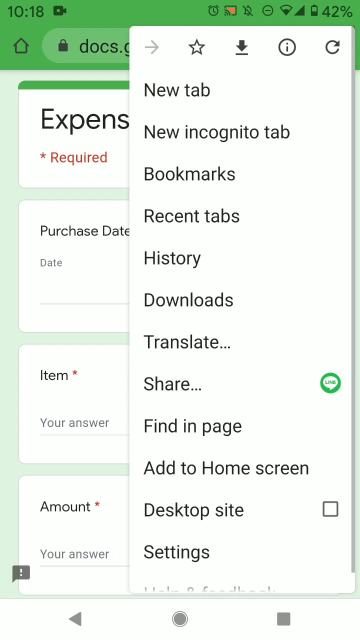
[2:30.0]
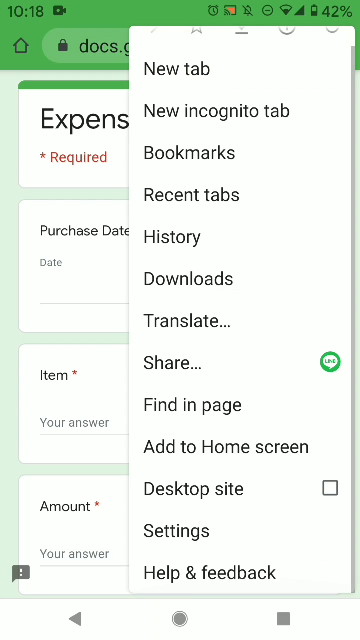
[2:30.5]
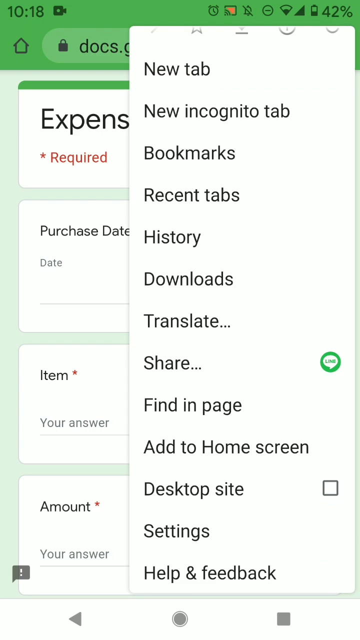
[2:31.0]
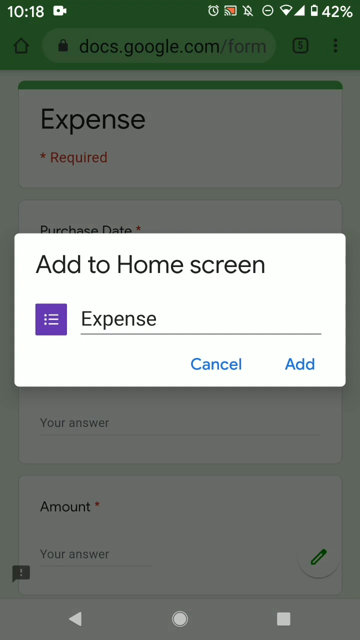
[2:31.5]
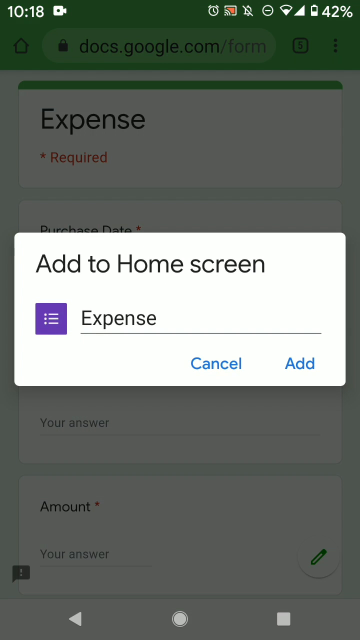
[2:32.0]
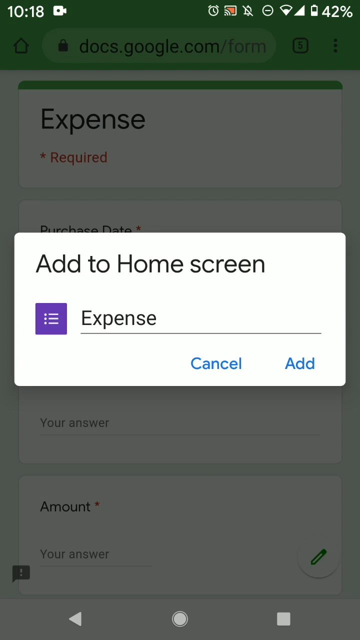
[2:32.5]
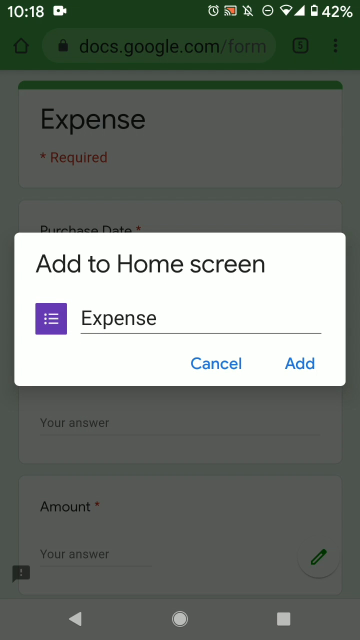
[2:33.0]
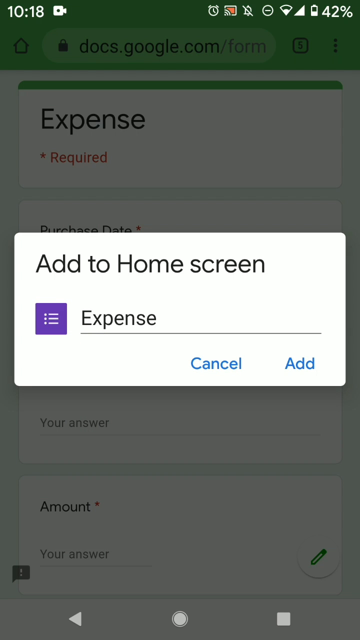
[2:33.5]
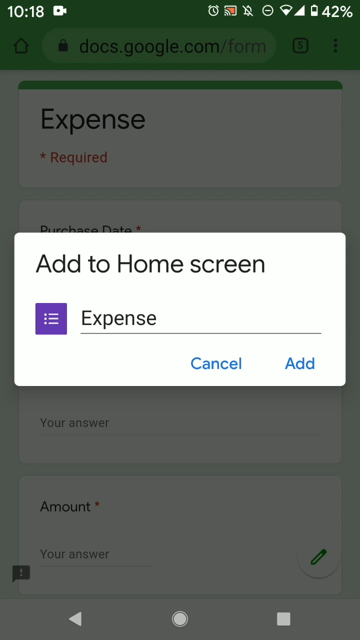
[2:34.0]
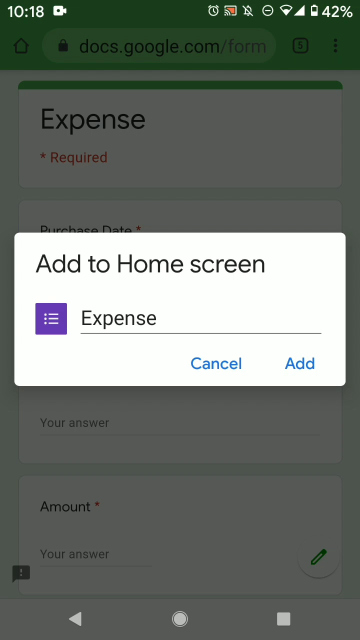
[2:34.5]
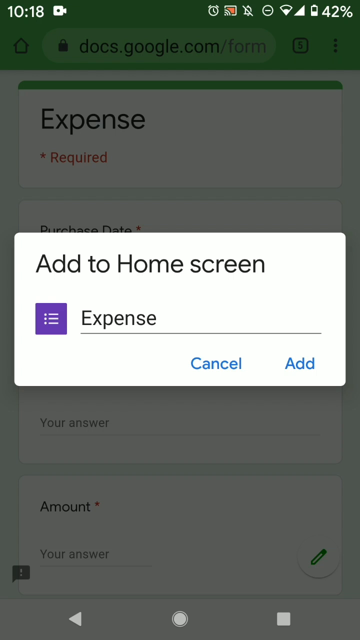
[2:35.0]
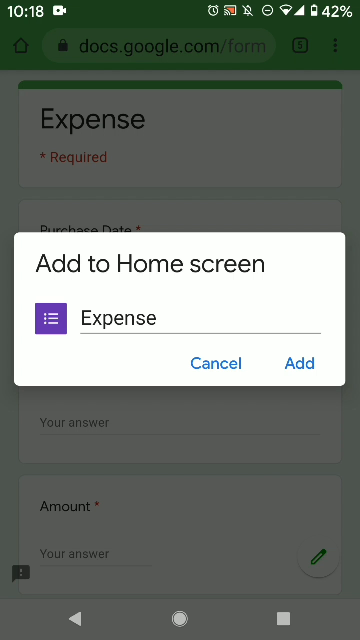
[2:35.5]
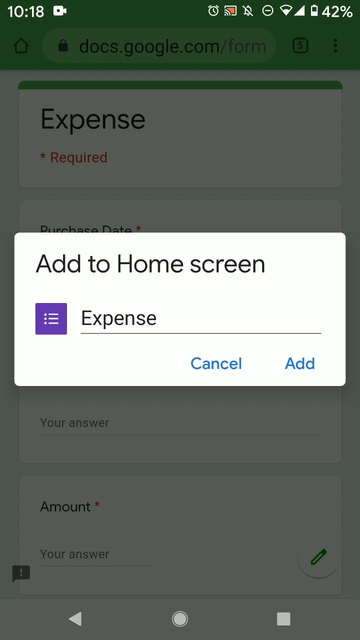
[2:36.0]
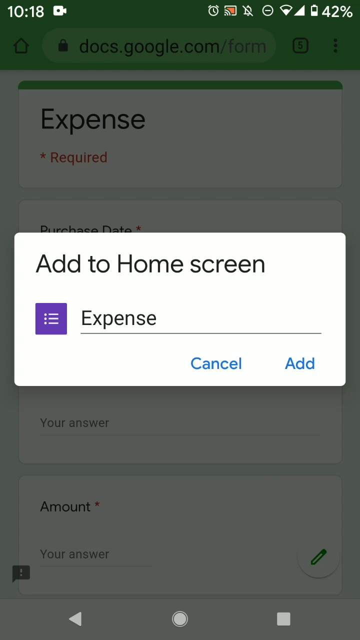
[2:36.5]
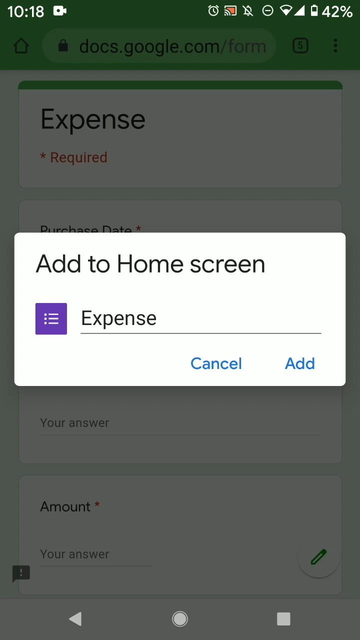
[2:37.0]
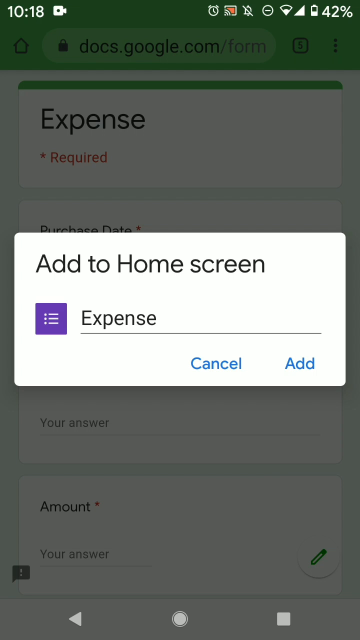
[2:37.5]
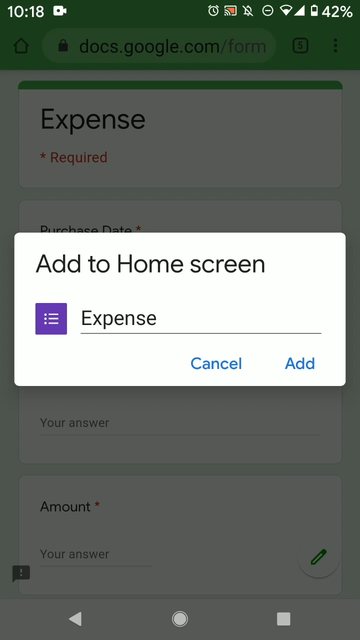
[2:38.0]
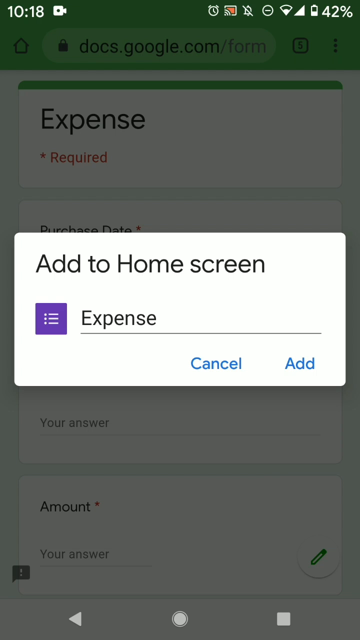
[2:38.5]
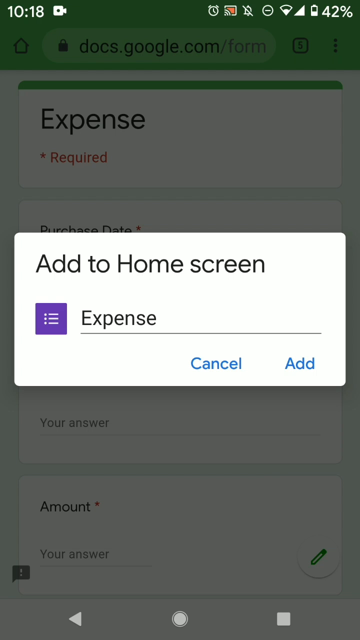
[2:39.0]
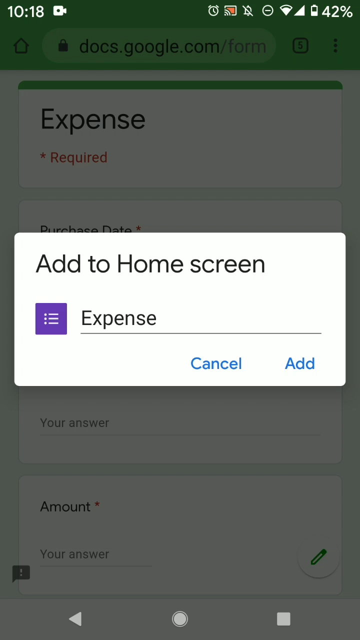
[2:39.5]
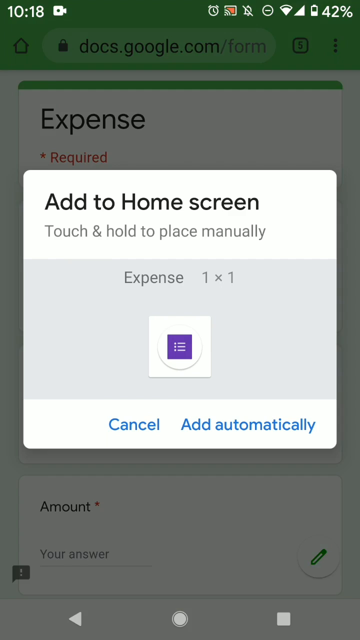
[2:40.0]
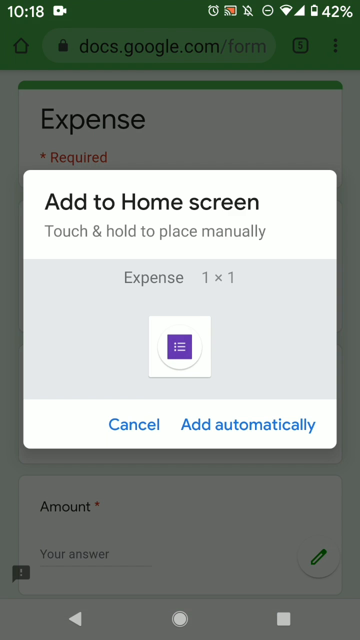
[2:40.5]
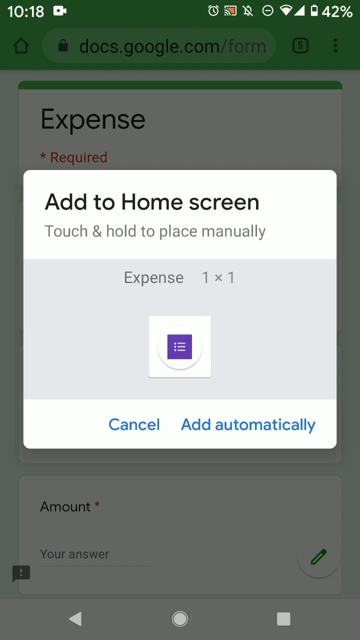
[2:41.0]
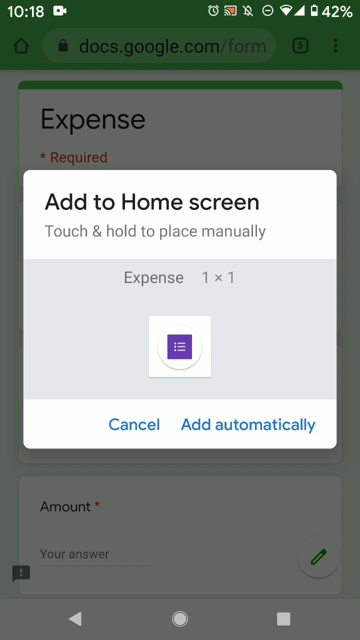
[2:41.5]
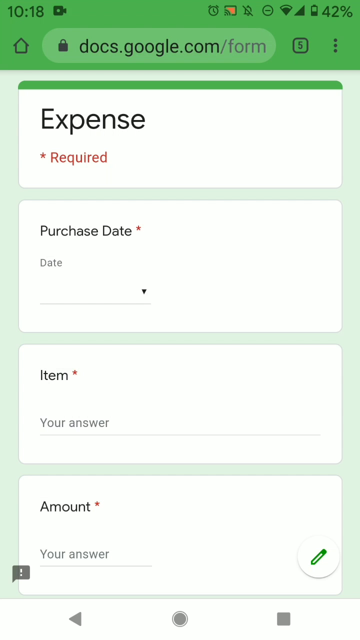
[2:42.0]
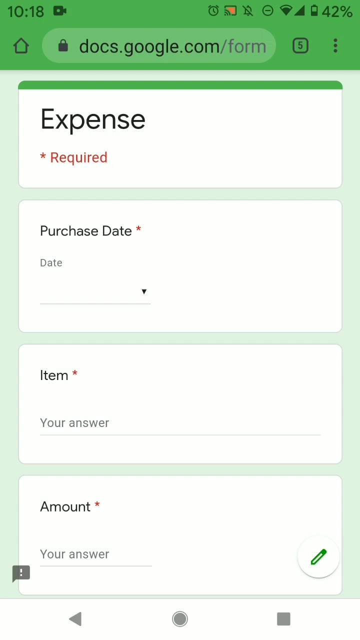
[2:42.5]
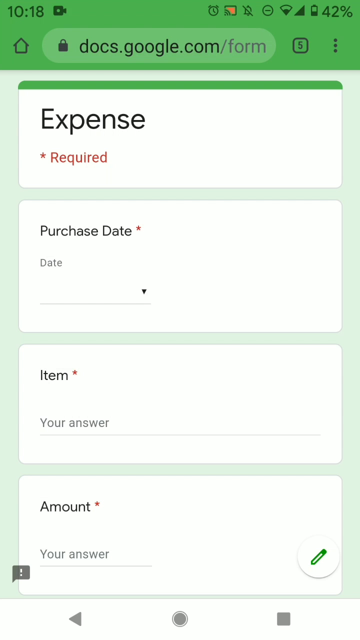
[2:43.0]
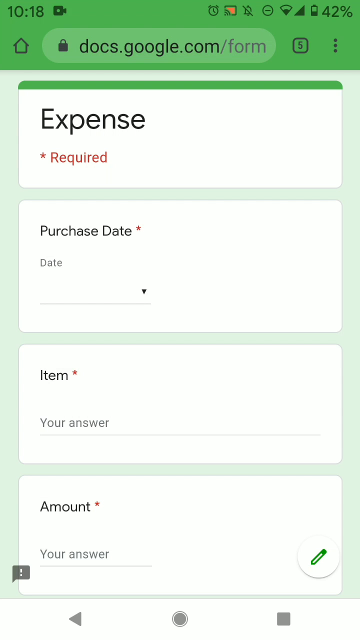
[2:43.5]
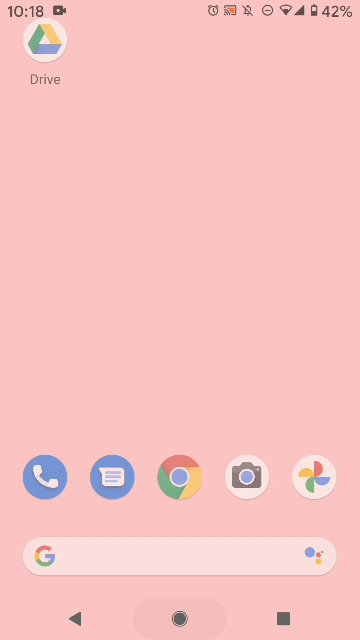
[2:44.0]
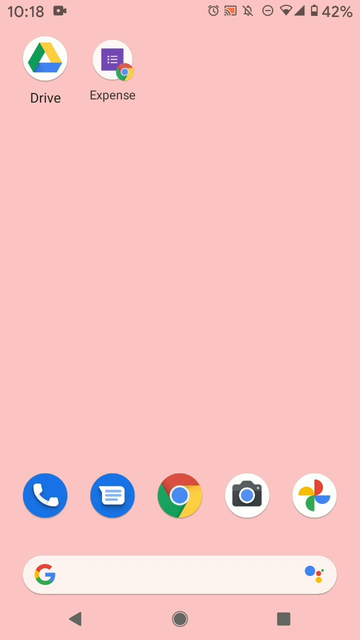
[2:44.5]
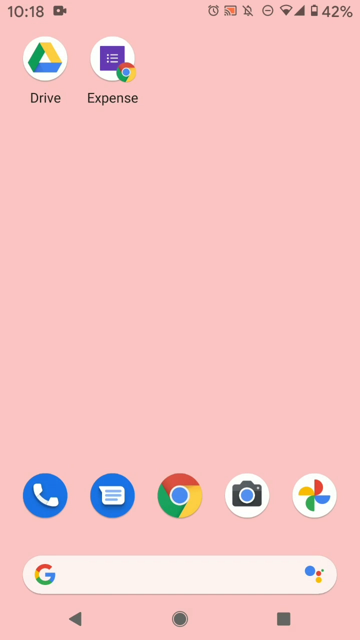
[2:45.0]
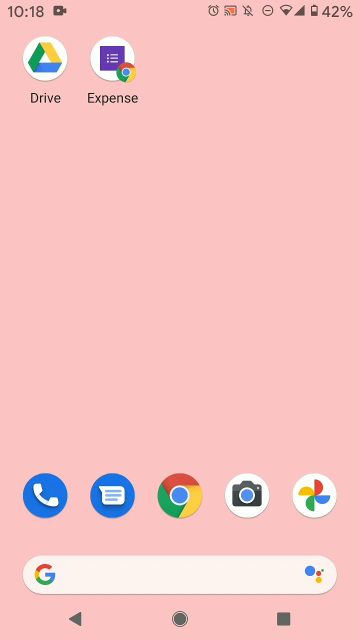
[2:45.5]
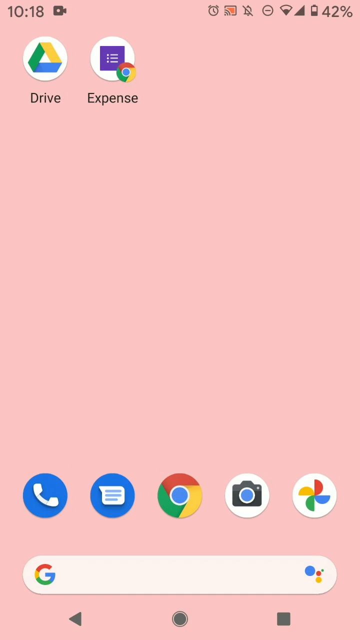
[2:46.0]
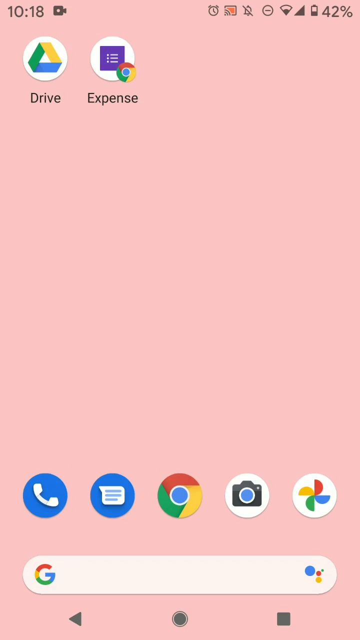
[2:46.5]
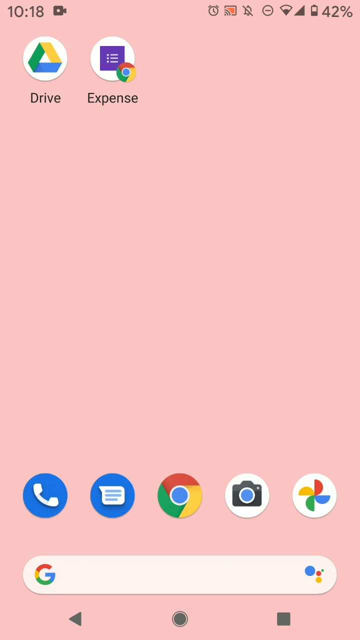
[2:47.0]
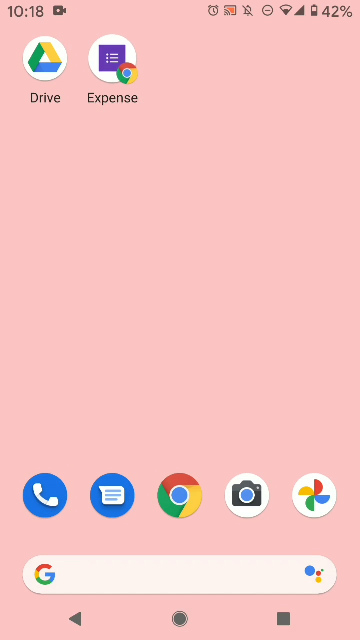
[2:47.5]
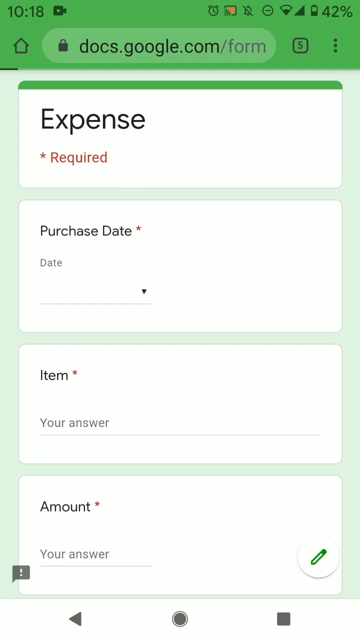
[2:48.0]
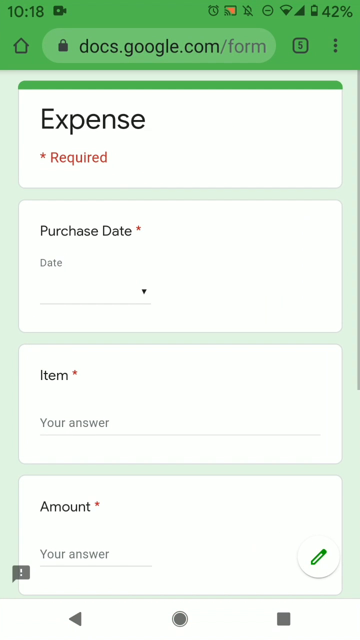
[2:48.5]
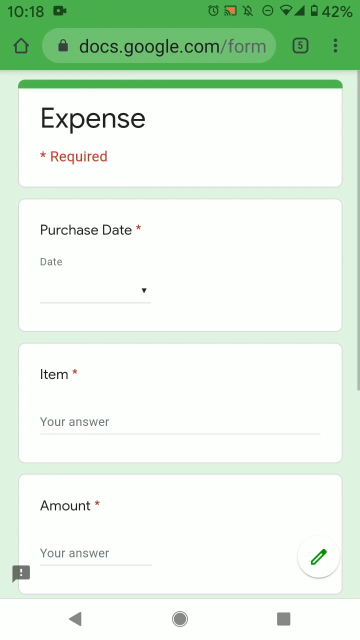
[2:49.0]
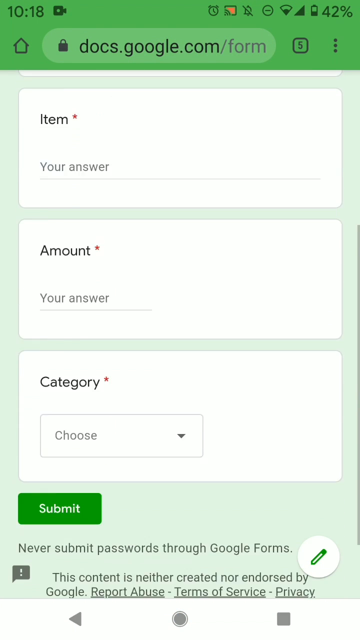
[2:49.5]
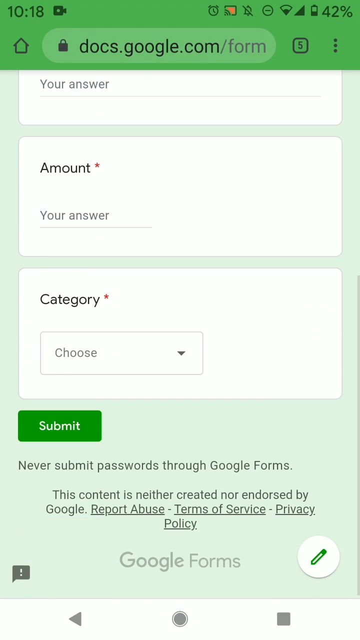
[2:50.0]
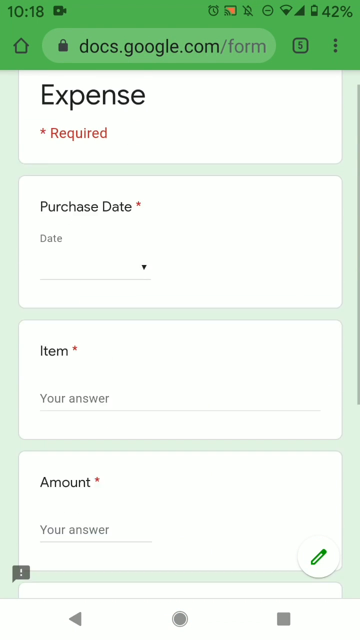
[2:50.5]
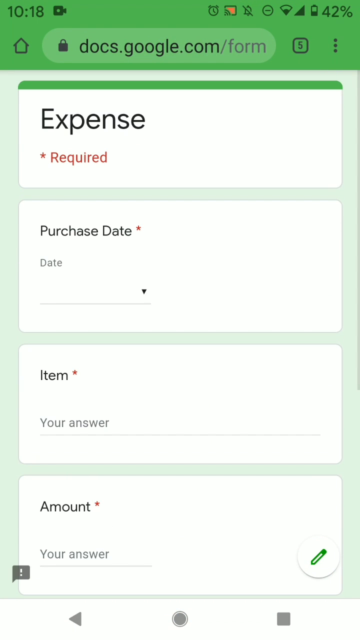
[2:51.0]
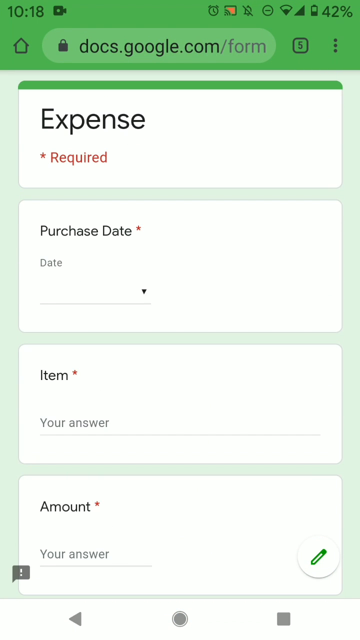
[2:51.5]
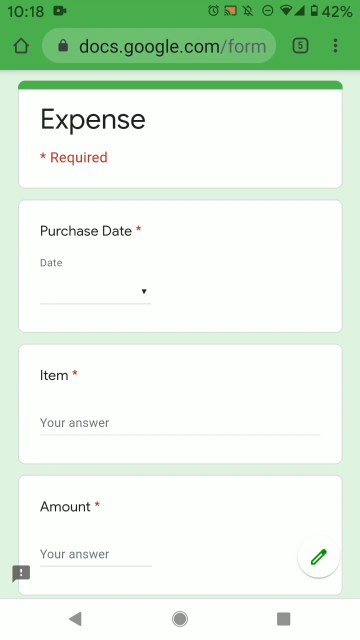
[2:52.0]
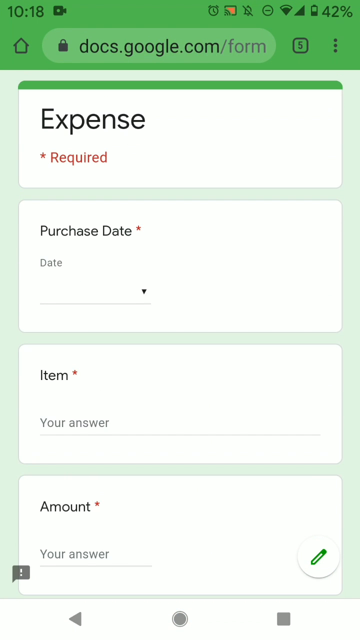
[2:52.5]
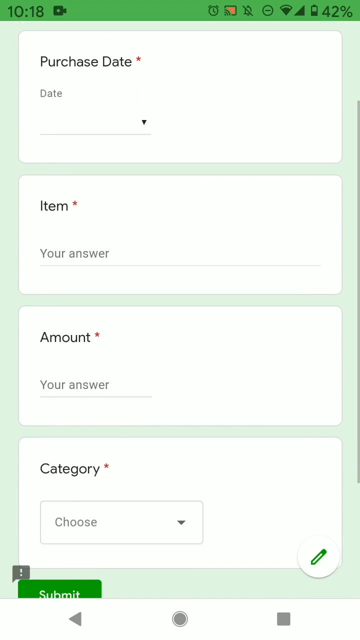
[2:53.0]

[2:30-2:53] A menu lists new tab, new incognito tab, bookmarks, recent tabs, history, downloads, translate, share, find in page, add to home screen, desktop site and settings. "Add to home screen" is selected, and what appears to be a white window appears with a purple square and "expense" to the right of it, plus blue buttons reading "cancel" and, to the right, "add". The screen then transitions to another add to home screen window with text reading "touch and hold to place manually" and "expense" below it. Below that is a white square containing a white circle with a purple square inside. At the bottom are "cancel" and "add automatically"; "add automatically" is selected, and the expense icon appears on the smartphone's home screen.